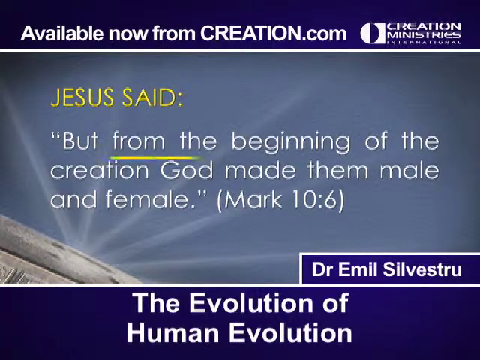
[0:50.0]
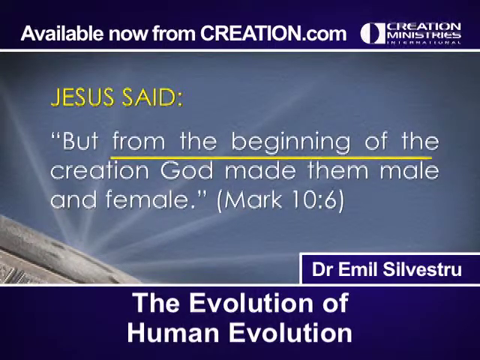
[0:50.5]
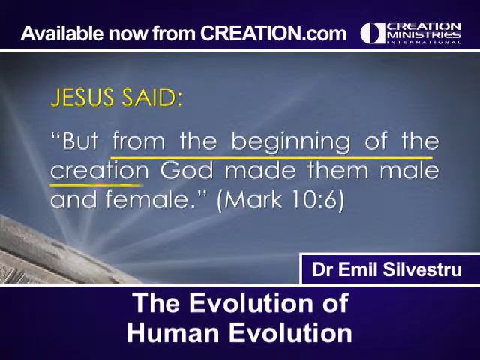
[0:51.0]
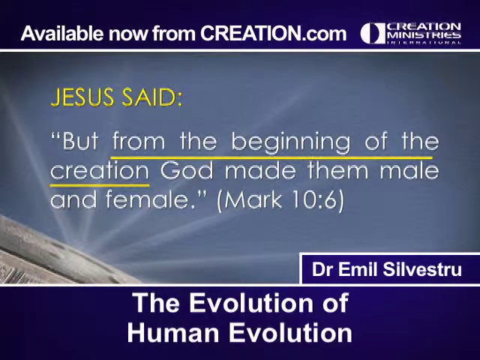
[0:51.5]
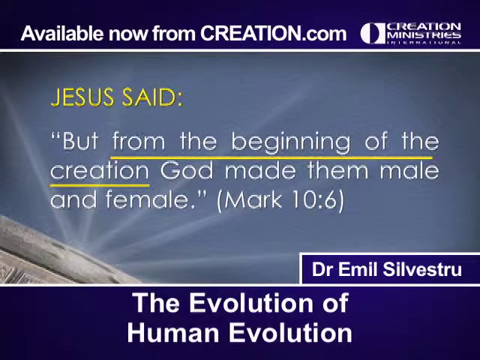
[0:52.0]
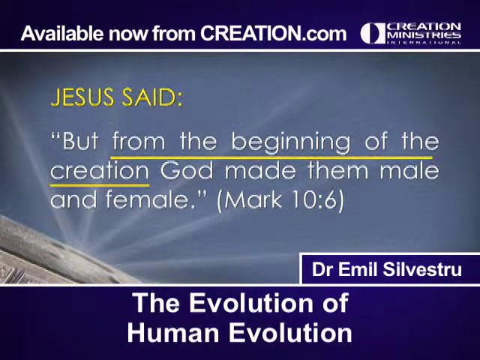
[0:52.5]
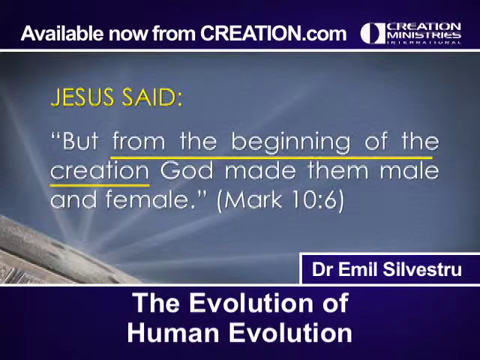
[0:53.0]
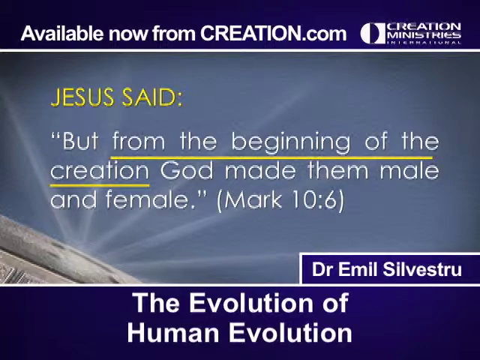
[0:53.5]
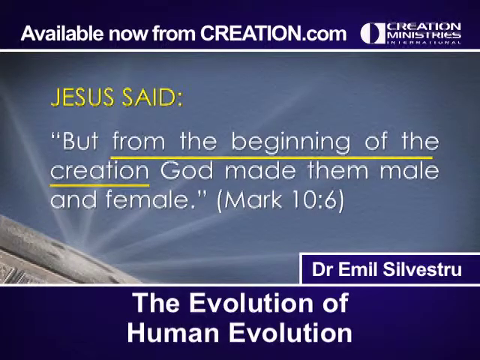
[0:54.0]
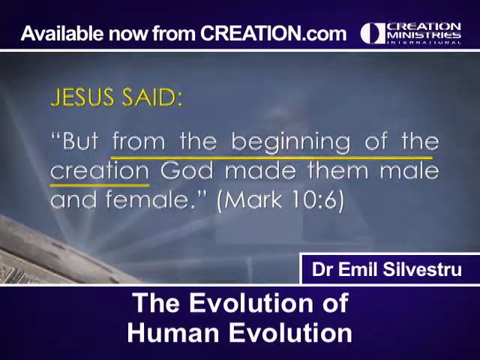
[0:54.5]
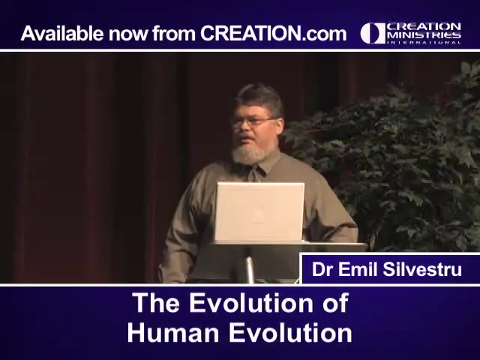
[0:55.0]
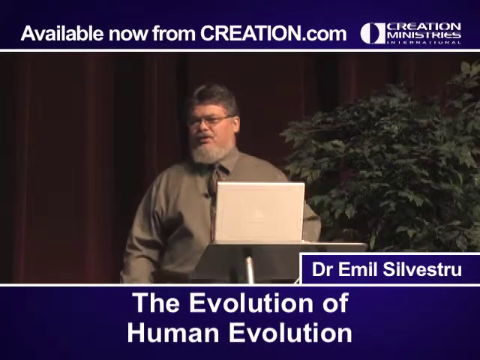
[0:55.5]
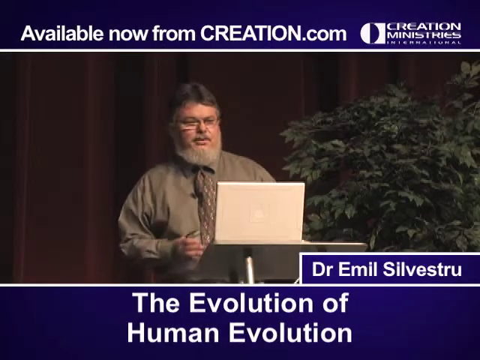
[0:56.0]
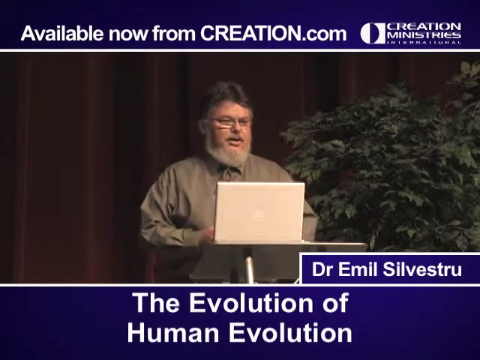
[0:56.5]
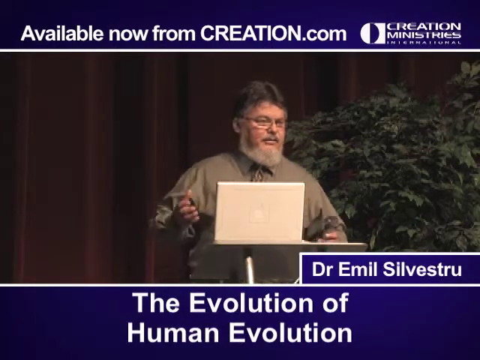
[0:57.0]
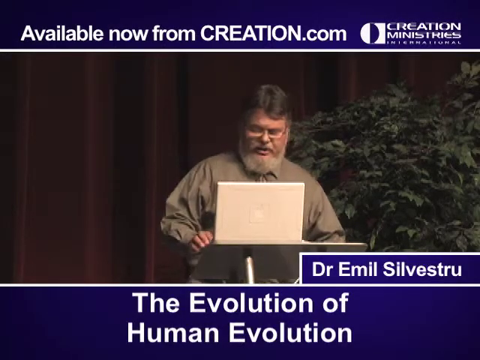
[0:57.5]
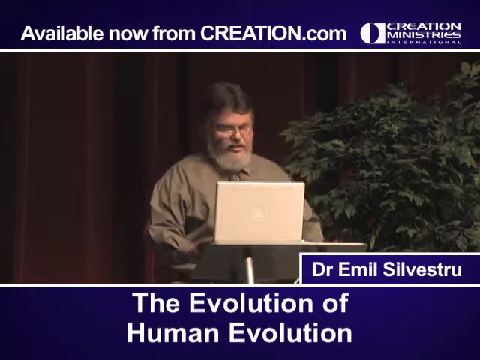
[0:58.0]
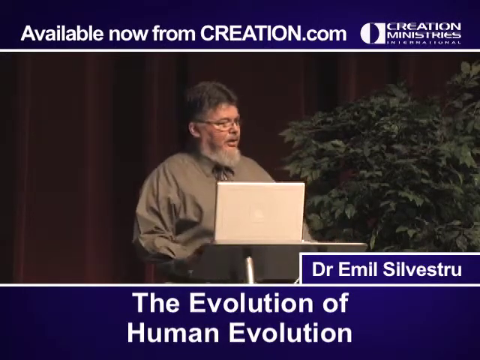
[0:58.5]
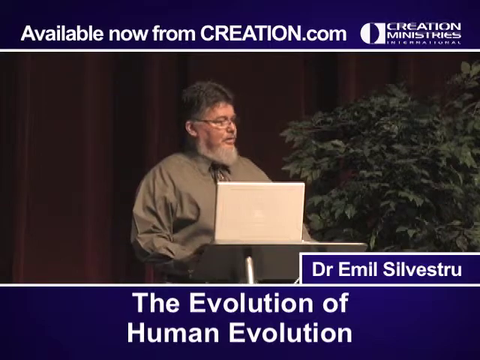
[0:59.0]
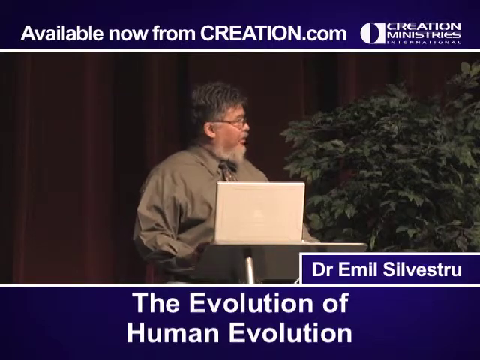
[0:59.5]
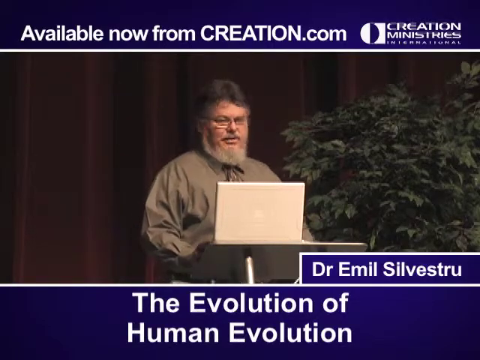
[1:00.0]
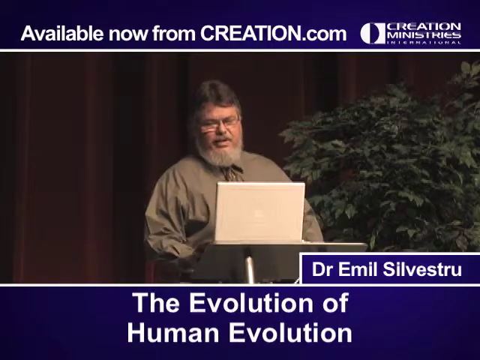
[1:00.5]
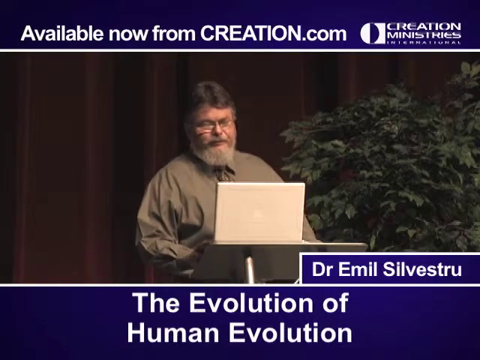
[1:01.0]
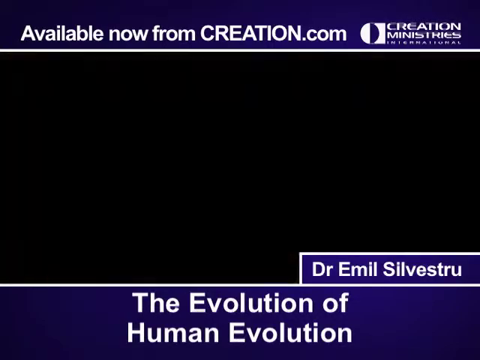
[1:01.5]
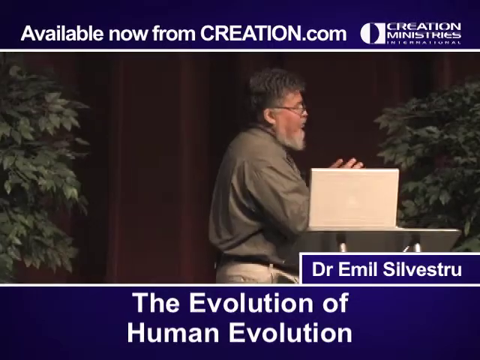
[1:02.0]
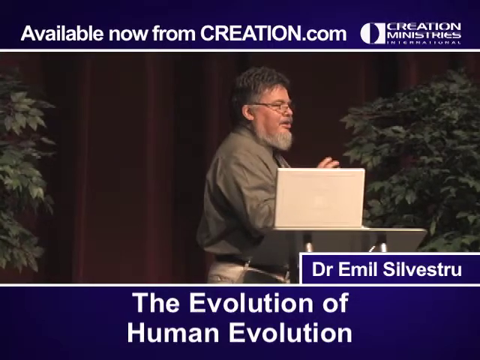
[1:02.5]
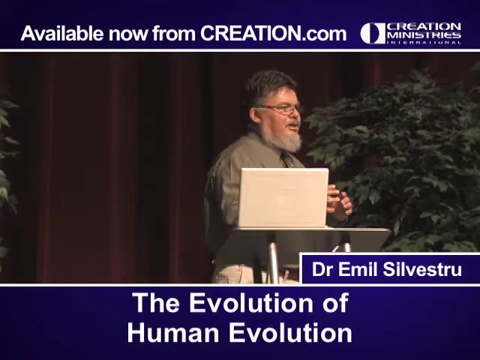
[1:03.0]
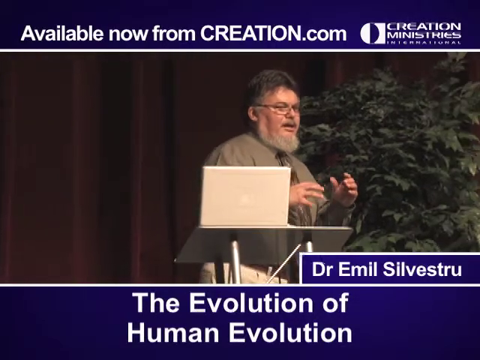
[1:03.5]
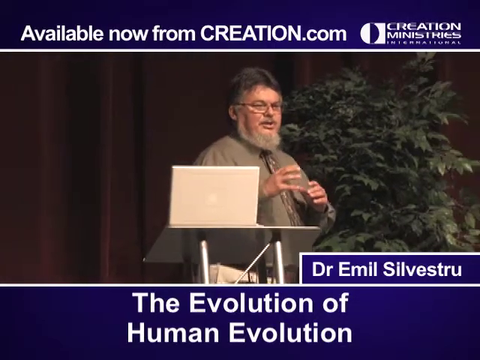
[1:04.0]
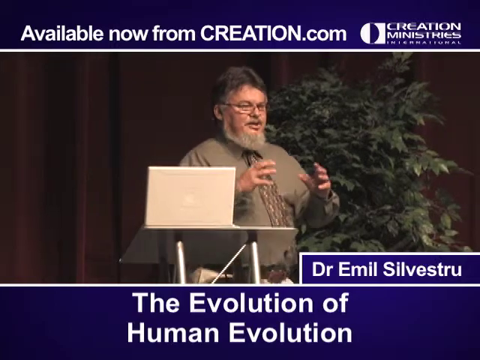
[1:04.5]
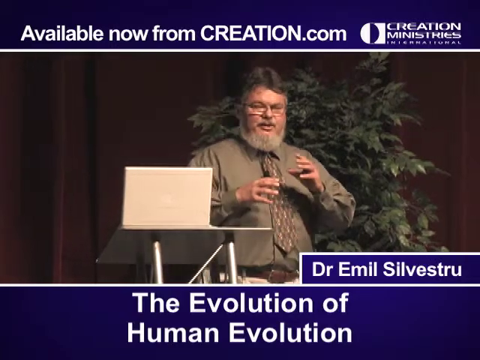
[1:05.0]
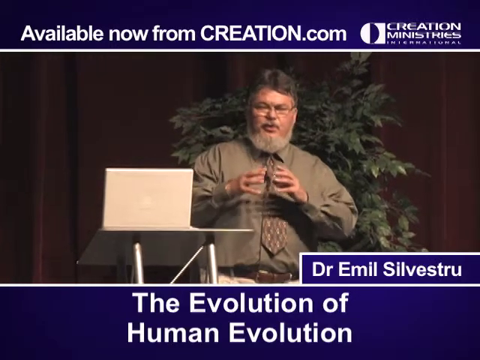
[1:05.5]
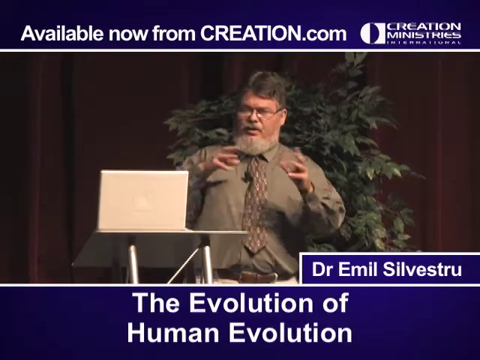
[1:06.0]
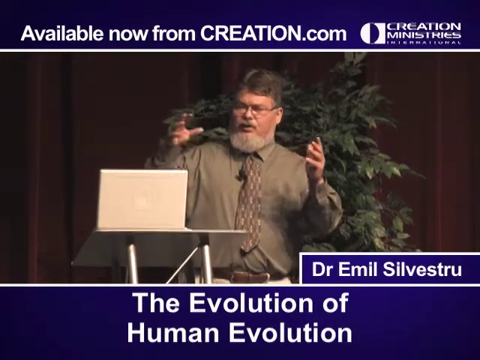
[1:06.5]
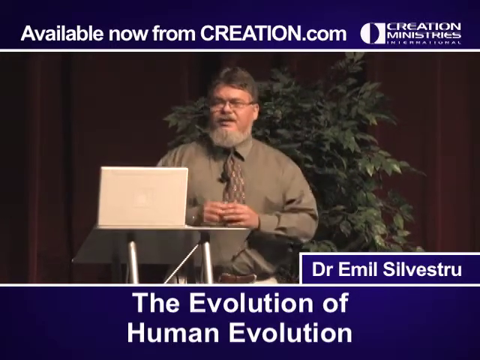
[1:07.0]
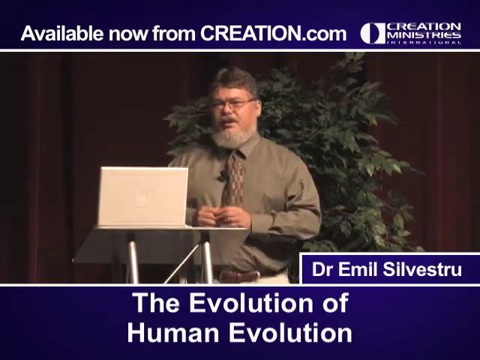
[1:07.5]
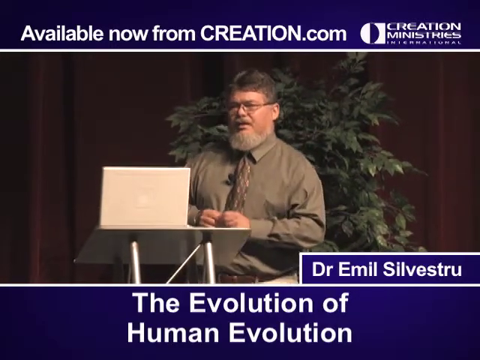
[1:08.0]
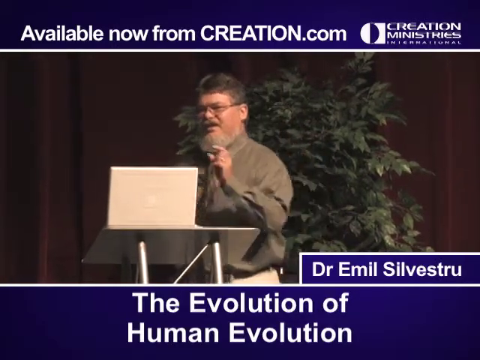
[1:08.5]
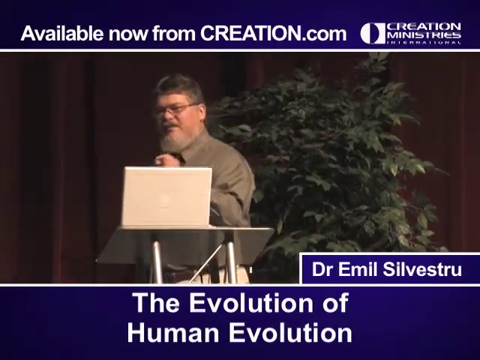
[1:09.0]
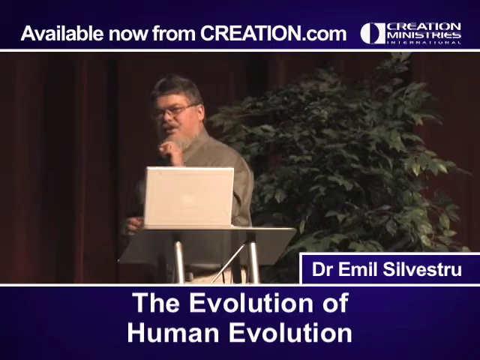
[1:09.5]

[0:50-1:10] Text on the screen reads "Jesus said, but from the beginning of the creation, God made them male and female, Mark 10.6." The words "from the beginning of the creation" are underlined with a yellow hairline for emphasis. The text fades, and a man is seen standing at what looks like a pulpit, with a plant behind his right shoulder and drawn dark red curtains behind him. He wears a brown button-up shirt and a brown tie, and has a beard and glasses. A lectern is in front of him with an Apple laptop computer on top. Filmed from the perspective of the audience, he talks to the audience, holding something in his left hand and gesturing at the crowd with his right hand, sort of looking back and forth to his left and right as he talks.